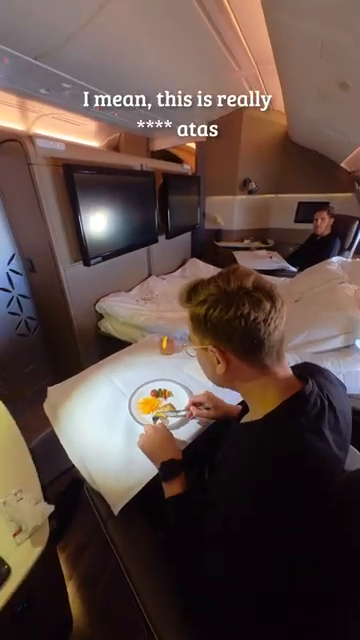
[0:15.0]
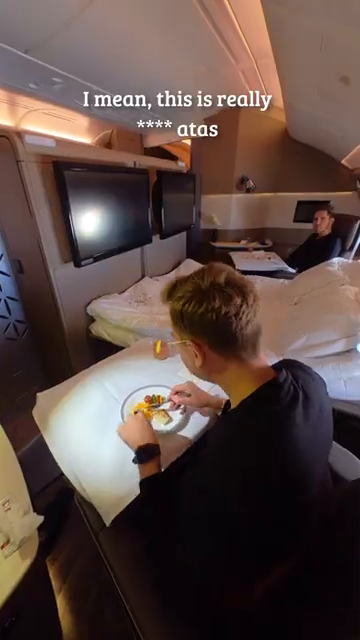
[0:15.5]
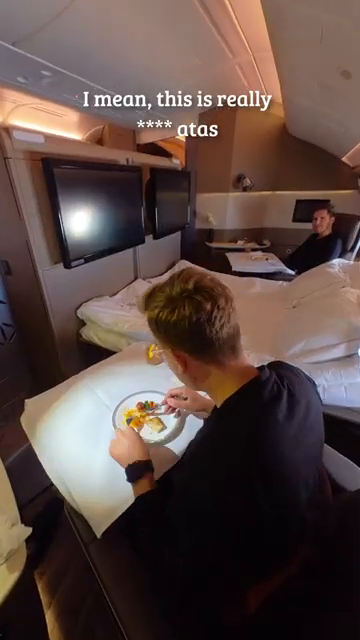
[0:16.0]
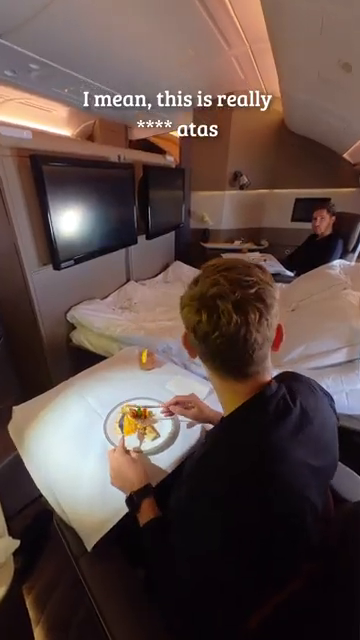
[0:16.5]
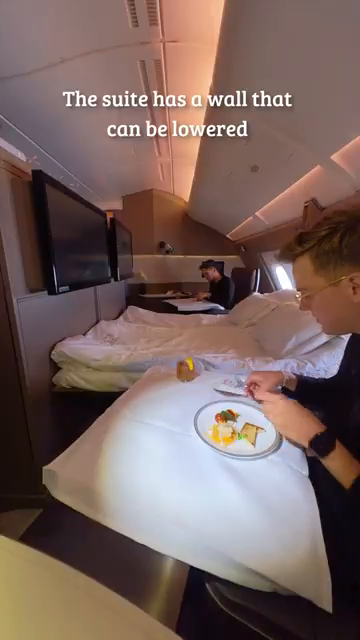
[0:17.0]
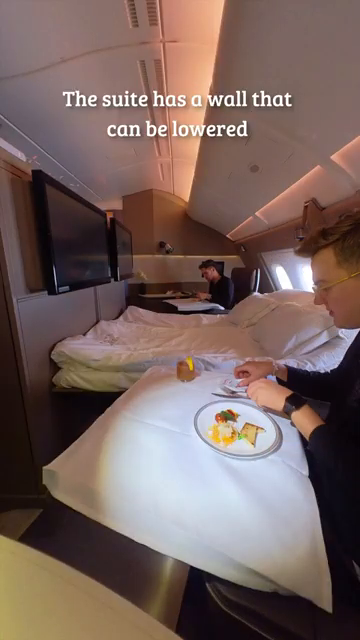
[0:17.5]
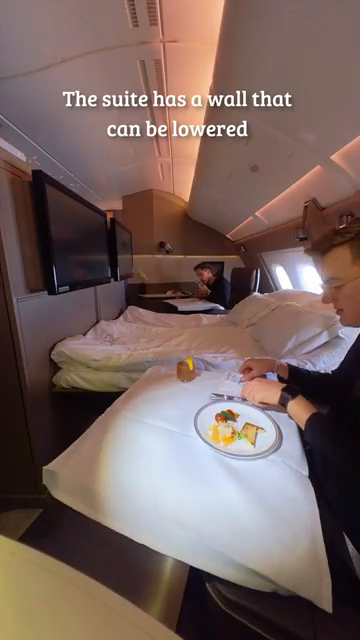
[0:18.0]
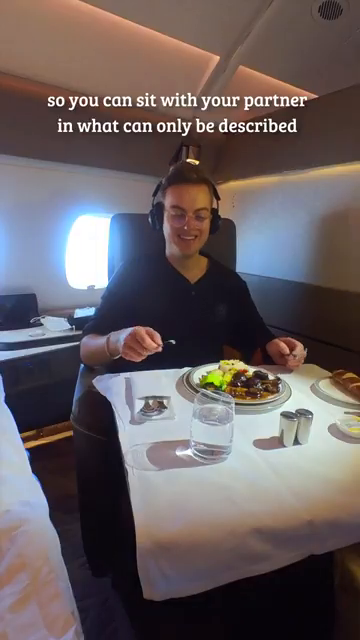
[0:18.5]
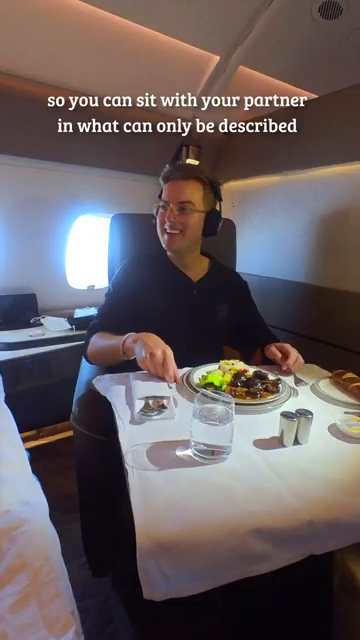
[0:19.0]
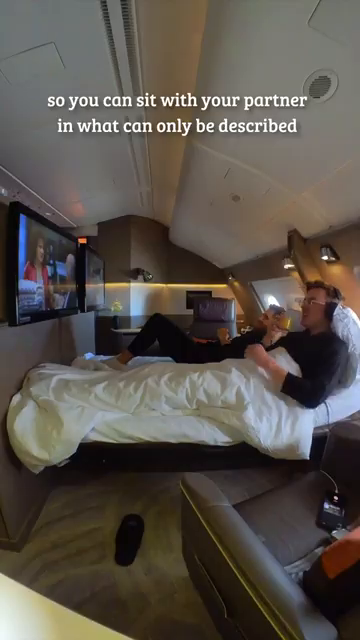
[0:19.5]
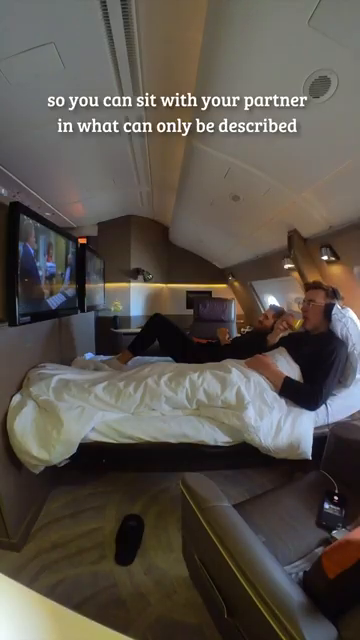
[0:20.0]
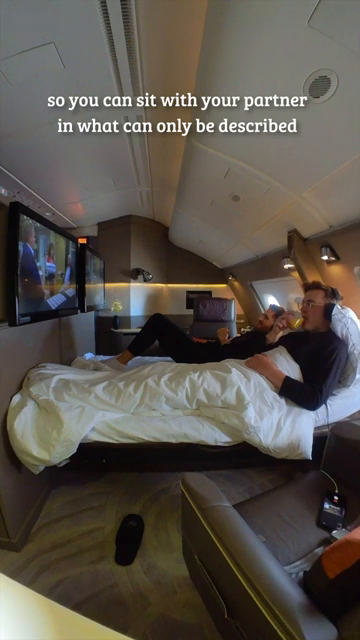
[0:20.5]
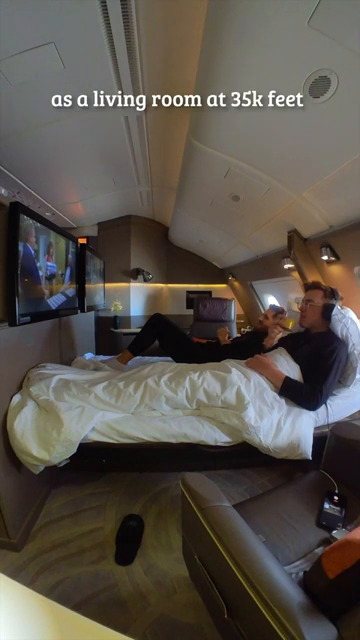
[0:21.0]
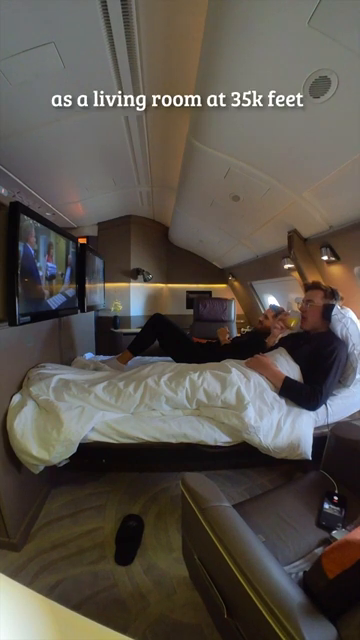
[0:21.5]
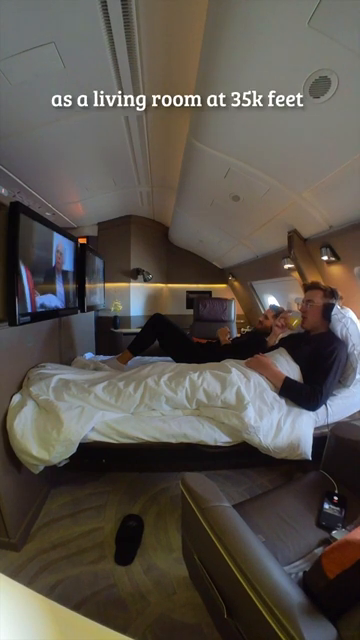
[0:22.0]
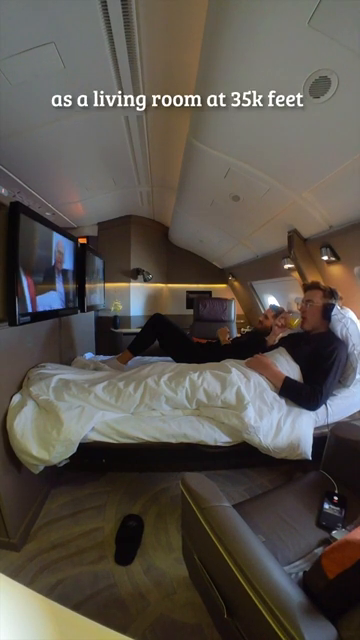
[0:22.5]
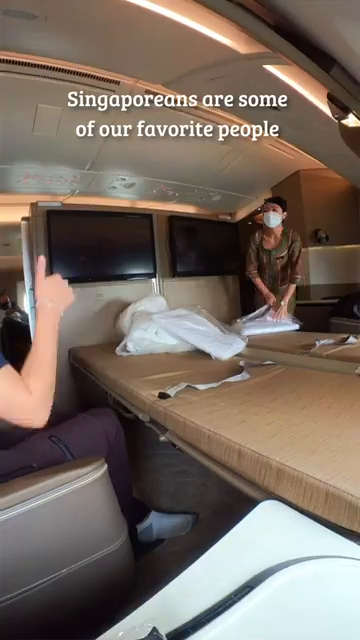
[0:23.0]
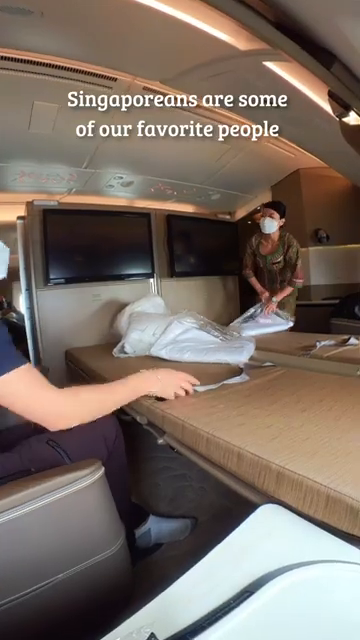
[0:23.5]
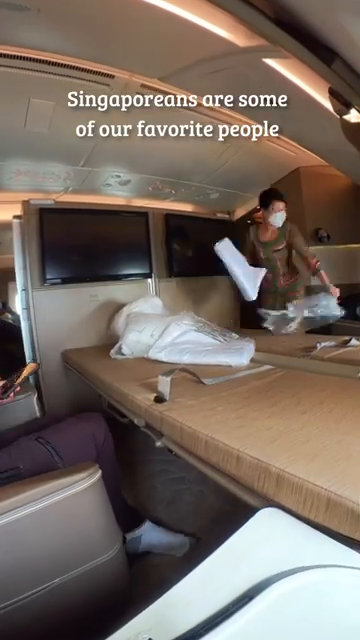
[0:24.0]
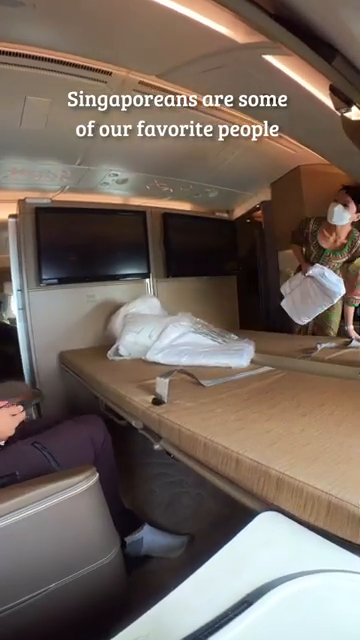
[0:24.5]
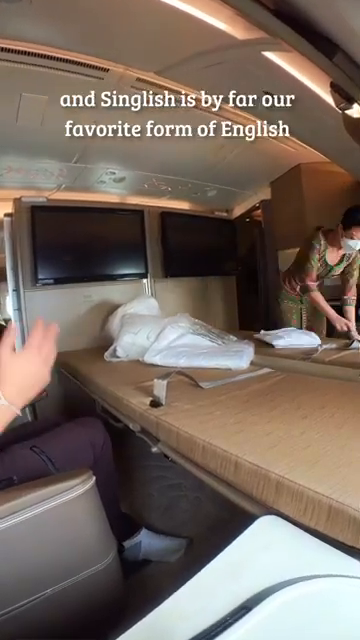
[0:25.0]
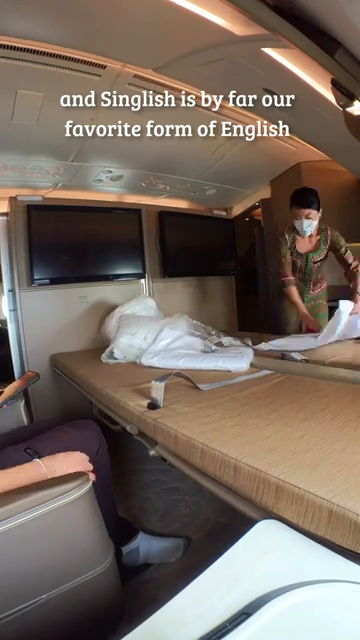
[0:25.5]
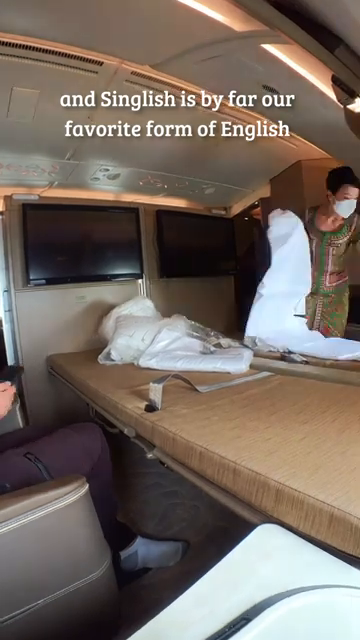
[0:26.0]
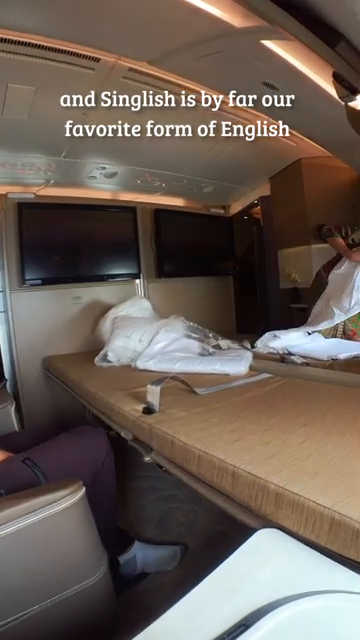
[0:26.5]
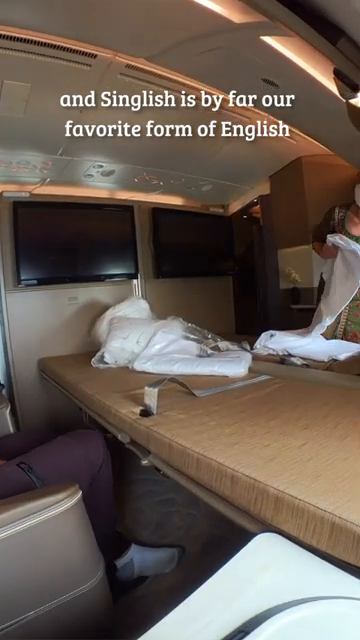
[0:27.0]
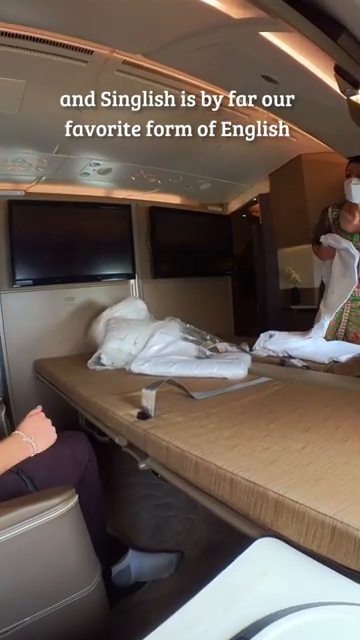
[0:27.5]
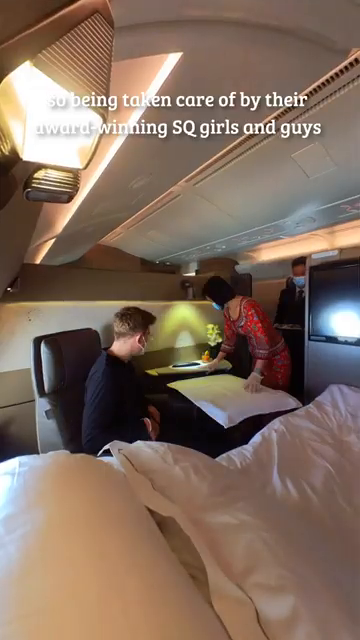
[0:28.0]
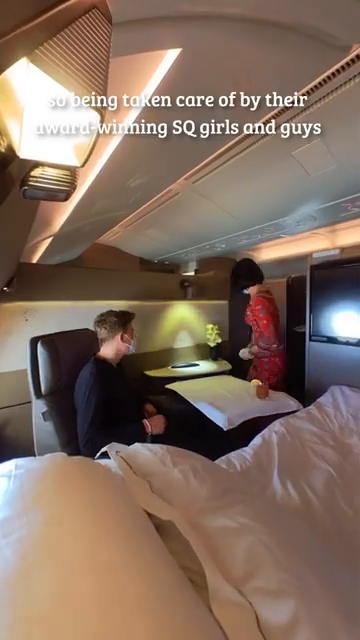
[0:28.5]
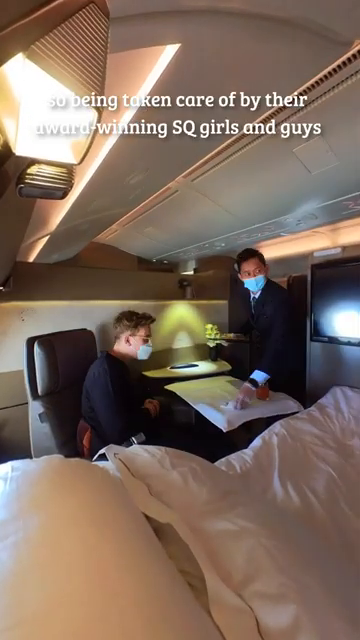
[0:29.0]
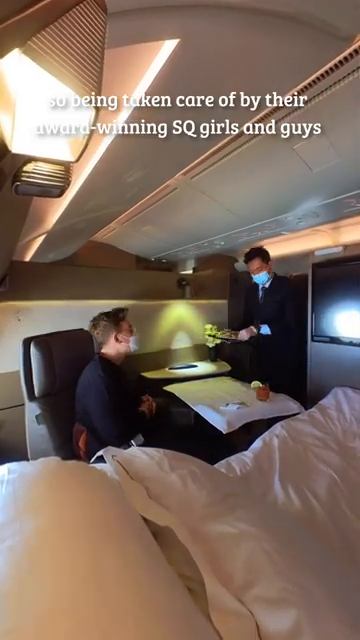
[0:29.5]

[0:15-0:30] The video switches back to two gentlemen sitting inside the very large suite with the double bed in the middle. First they both sit on their chairs on opposite sides of the bed, eating a nice meal. The camera pans over to them both in the bed, one on either side, each watching his own television with headphones on. Next, what appears to be a stewardess comes in and makes up their beds. The video then switches to them sitting at their chairs again, eating another meal.